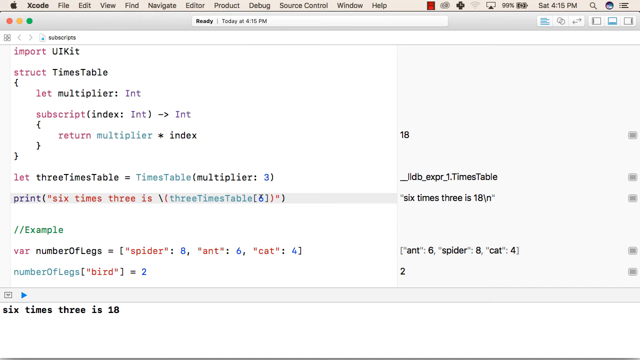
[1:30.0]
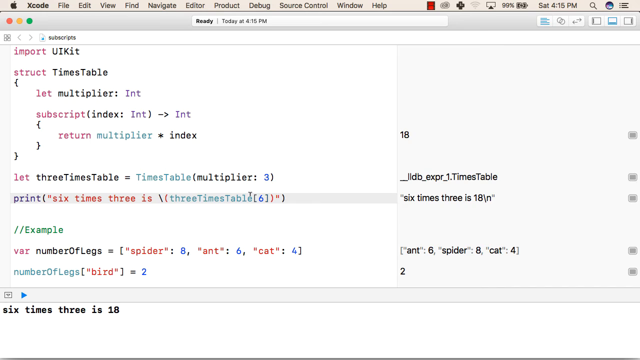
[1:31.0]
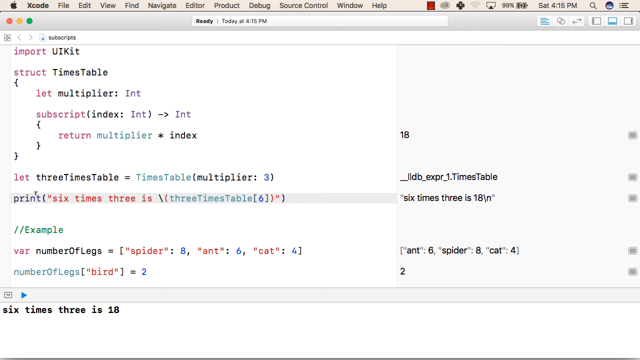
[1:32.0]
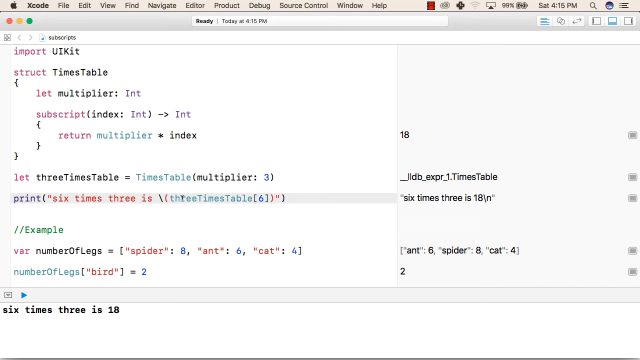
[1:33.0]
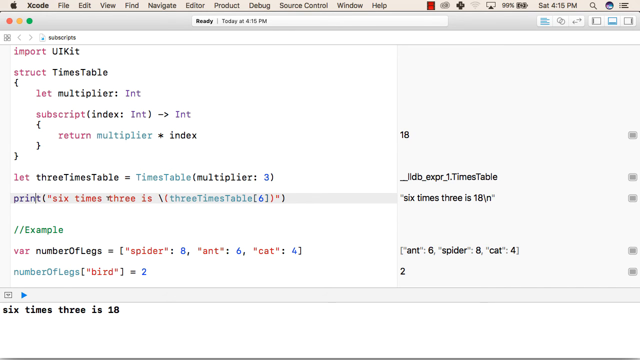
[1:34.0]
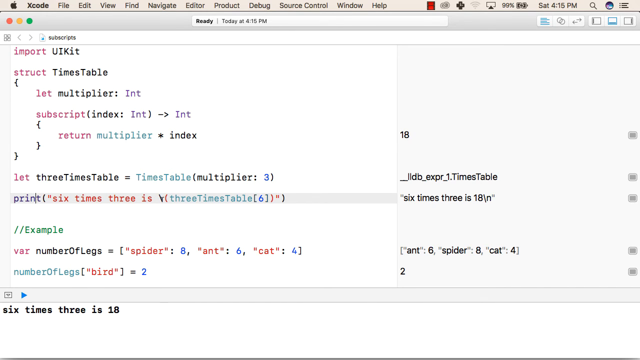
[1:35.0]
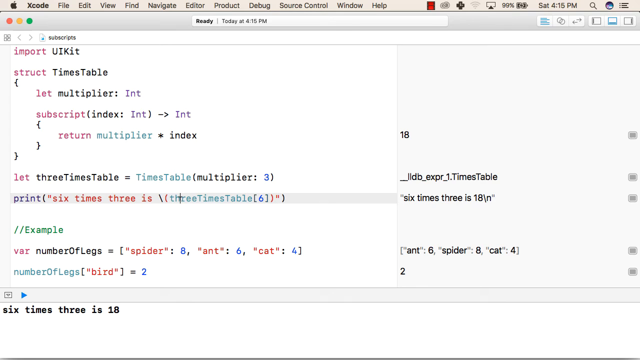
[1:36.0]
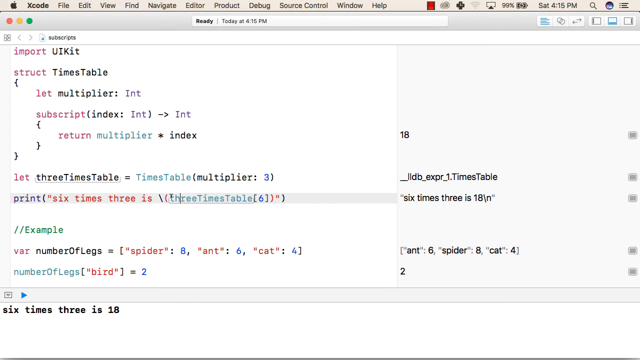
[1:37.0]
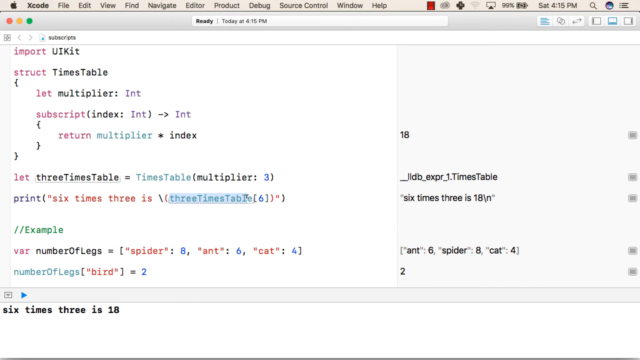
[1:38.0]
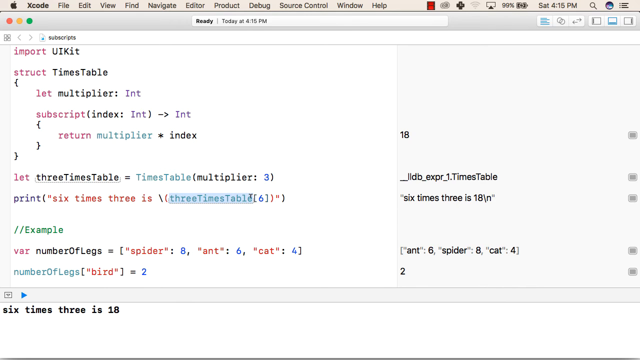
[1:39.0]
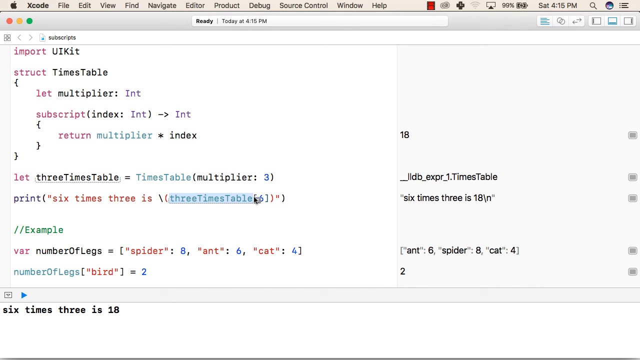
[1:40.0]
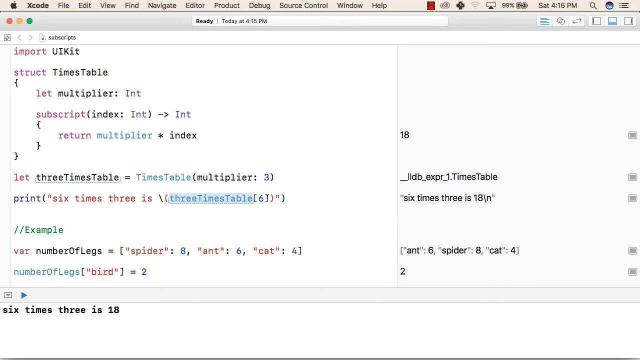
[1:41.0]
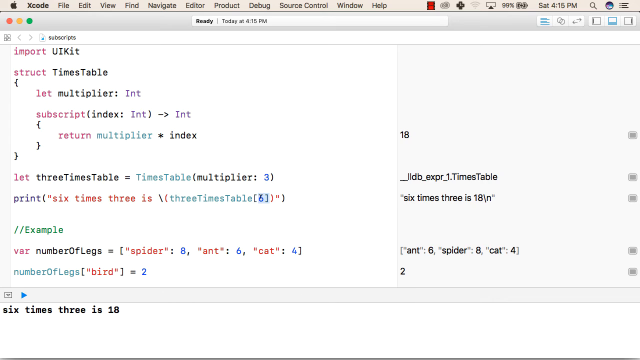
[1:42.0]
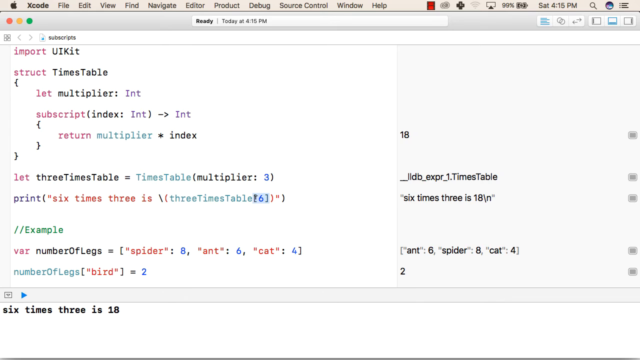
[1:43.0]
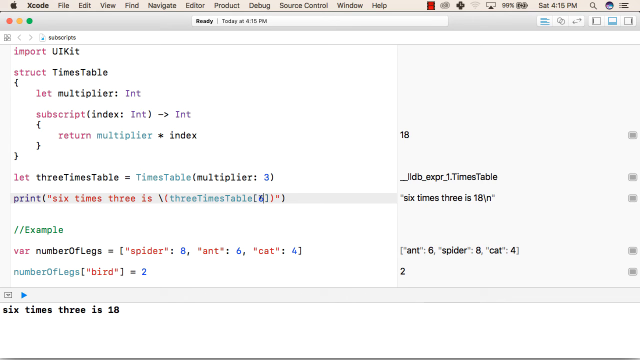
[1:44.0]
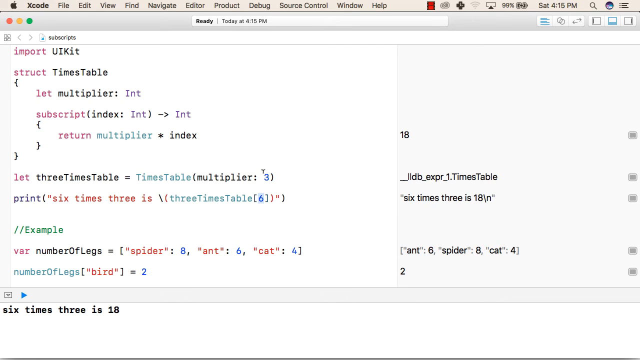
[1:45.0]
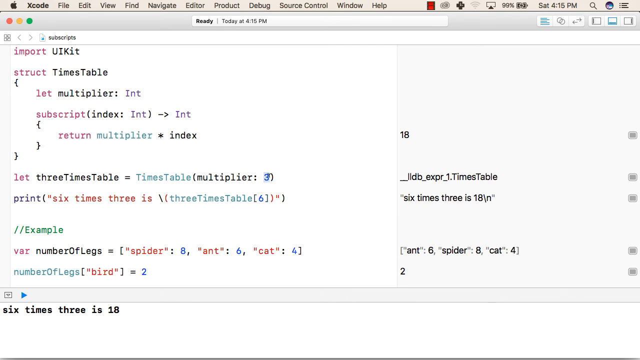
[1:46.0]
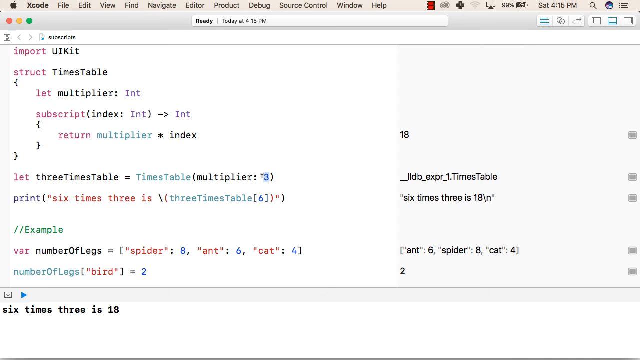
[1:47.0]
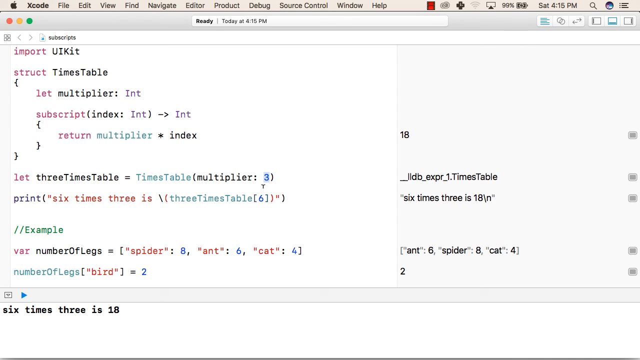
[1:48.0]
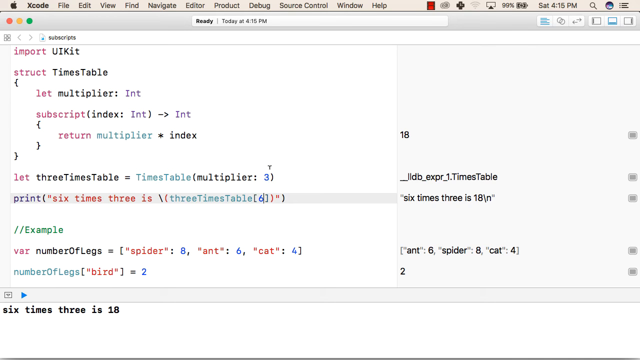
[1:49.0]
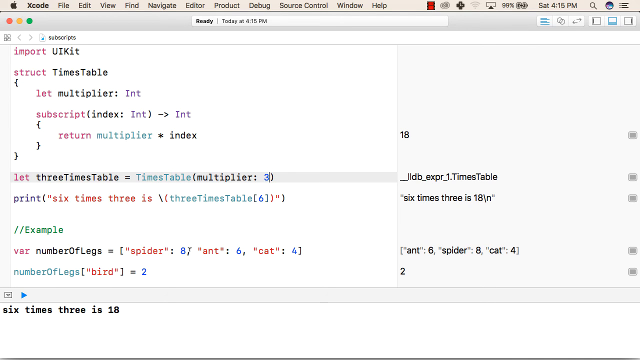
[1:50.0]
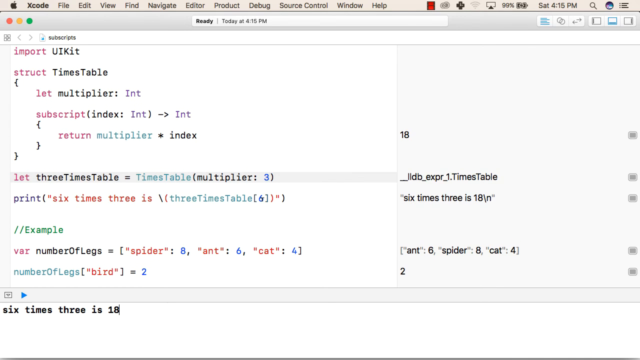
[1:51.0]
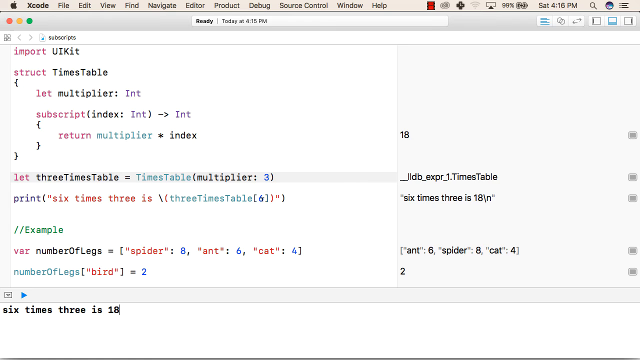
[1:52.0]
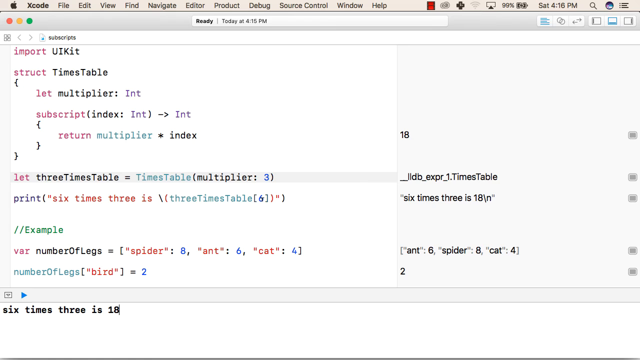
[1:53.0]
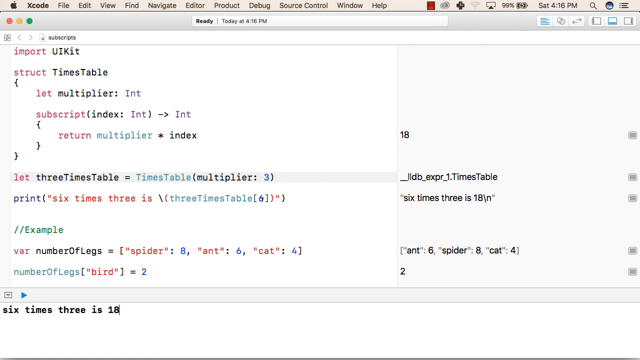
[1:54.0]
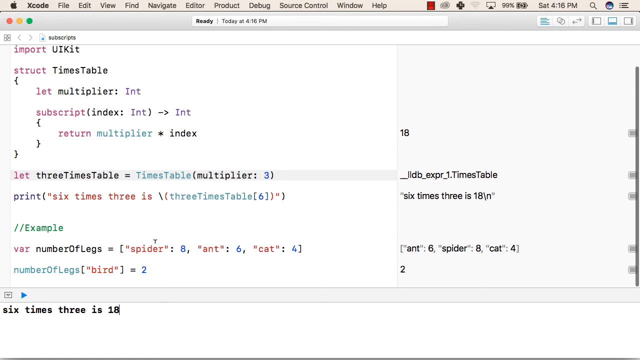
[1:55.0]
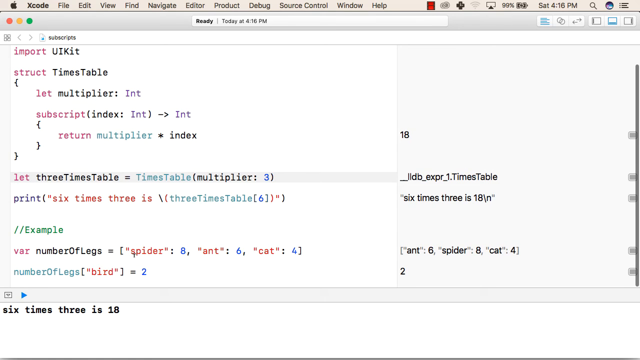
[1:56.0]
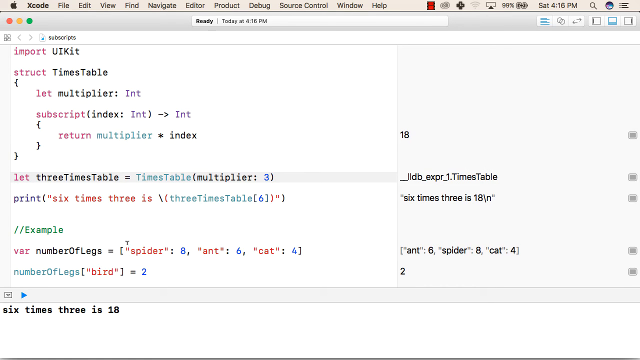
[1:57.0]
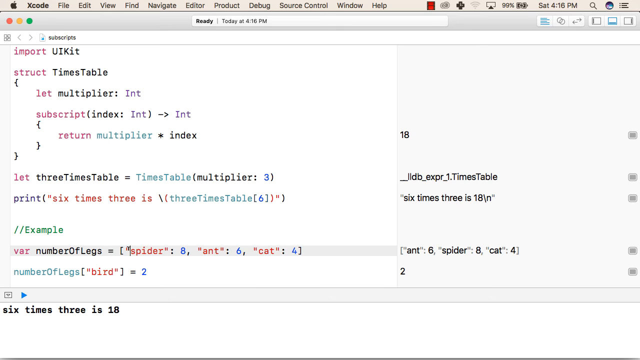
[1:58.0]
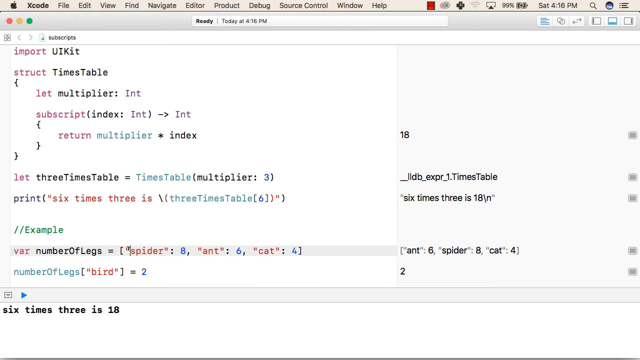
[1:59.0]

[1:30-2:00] The coding example continues, showing import, struct, let and subscript lines in Xcode. The man is not in view this time; only the code is shown as he demonstrates how to write a subscript.